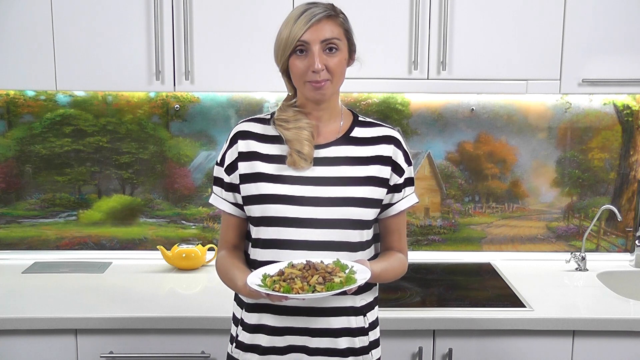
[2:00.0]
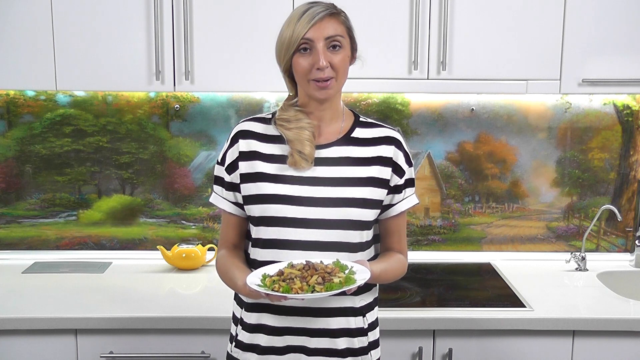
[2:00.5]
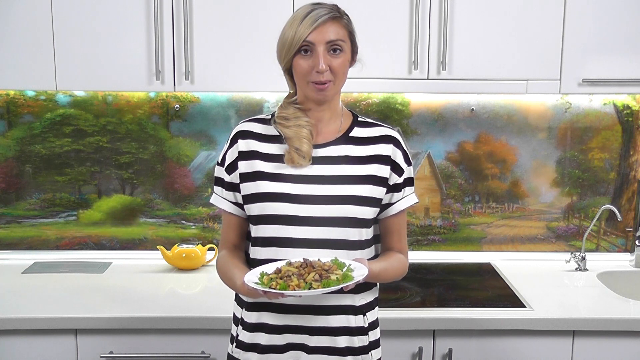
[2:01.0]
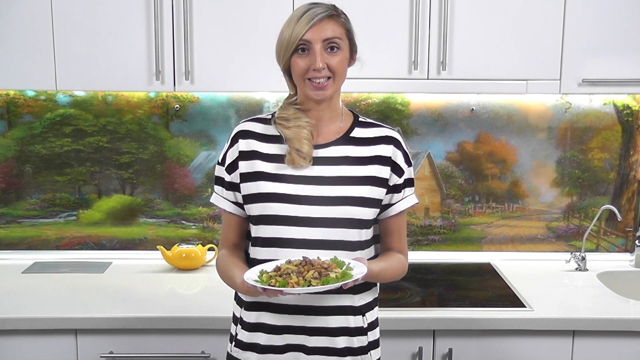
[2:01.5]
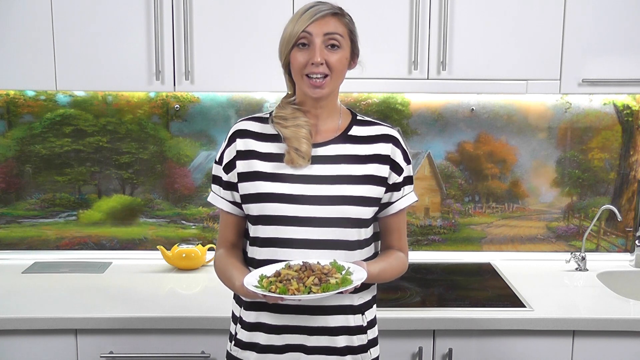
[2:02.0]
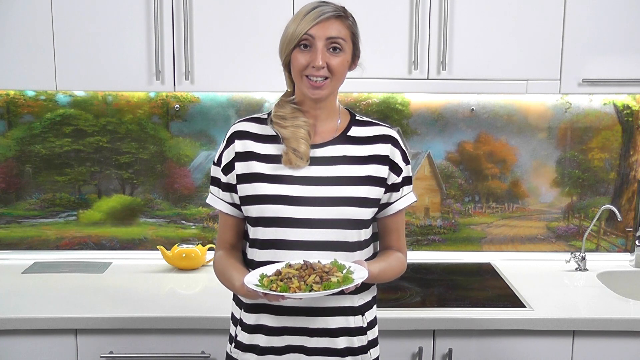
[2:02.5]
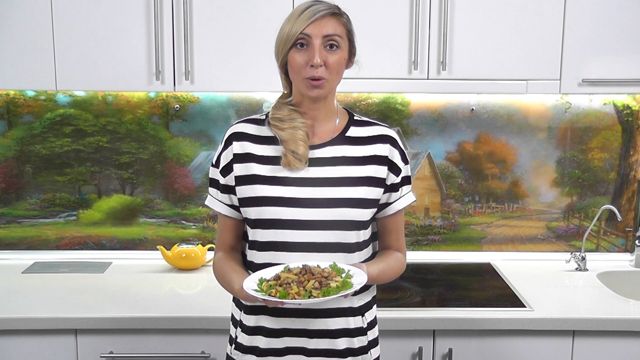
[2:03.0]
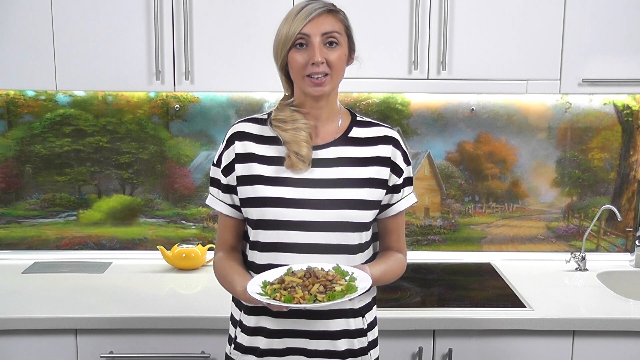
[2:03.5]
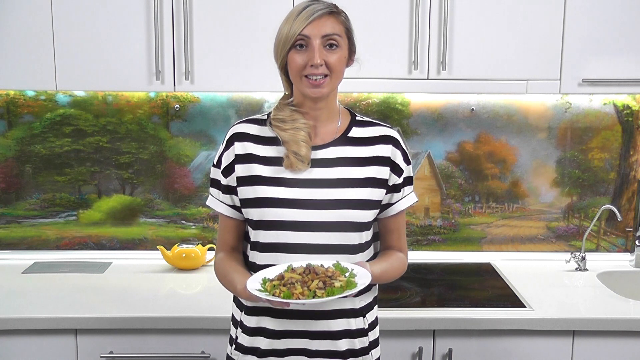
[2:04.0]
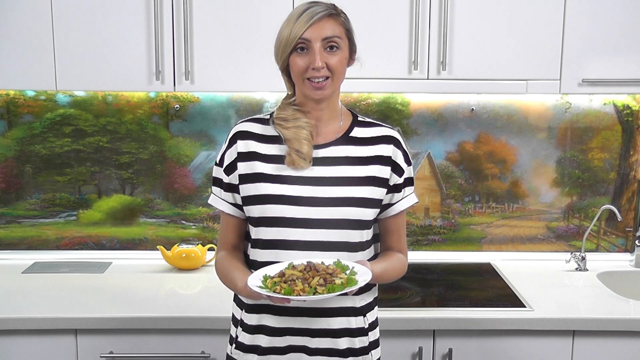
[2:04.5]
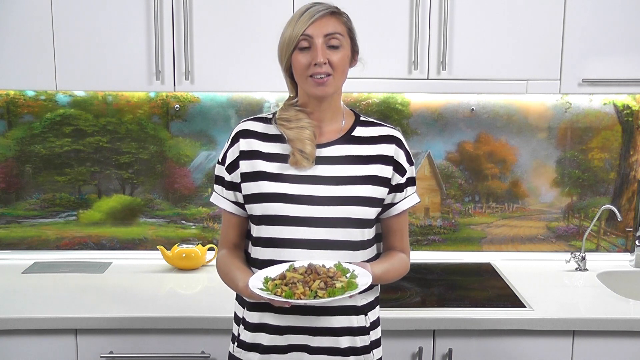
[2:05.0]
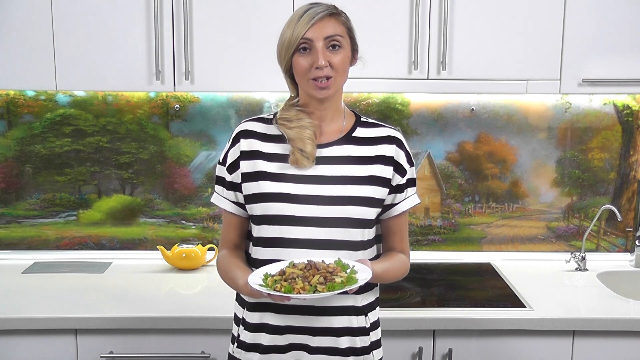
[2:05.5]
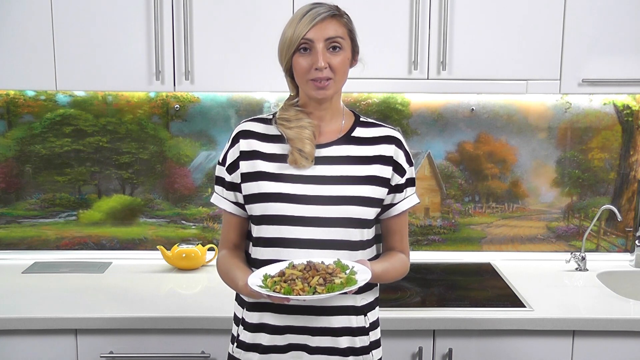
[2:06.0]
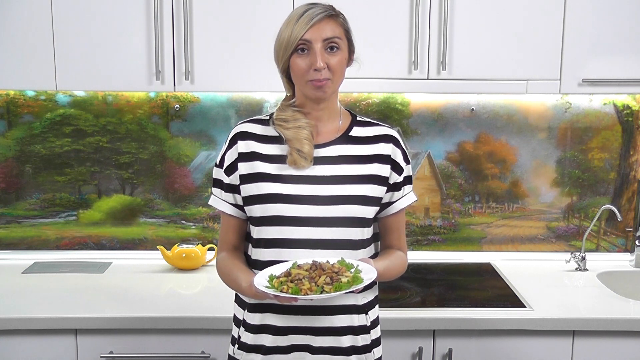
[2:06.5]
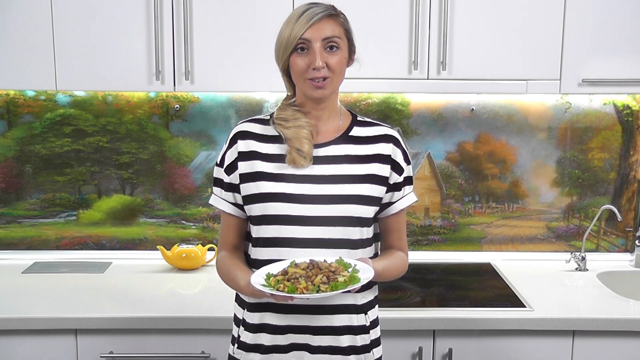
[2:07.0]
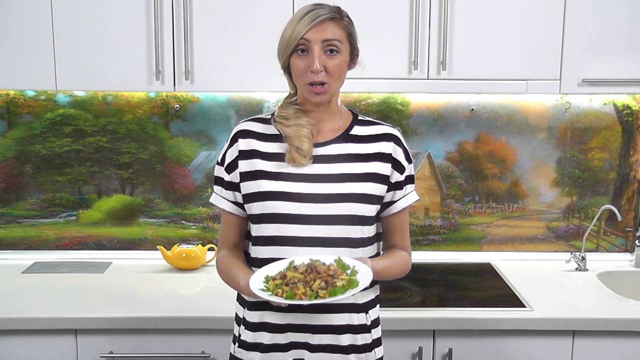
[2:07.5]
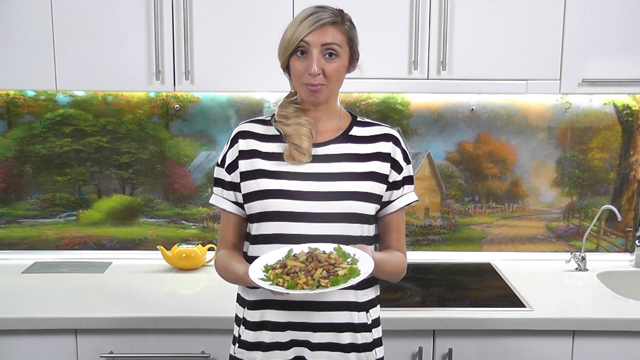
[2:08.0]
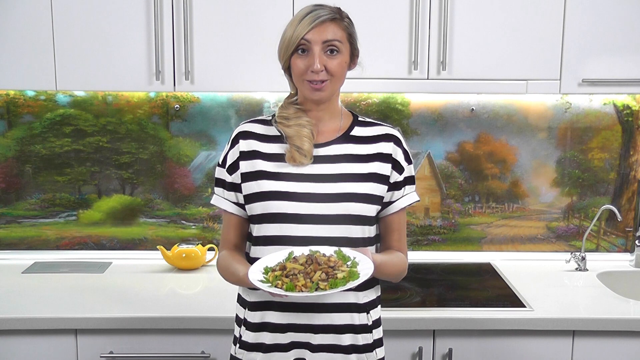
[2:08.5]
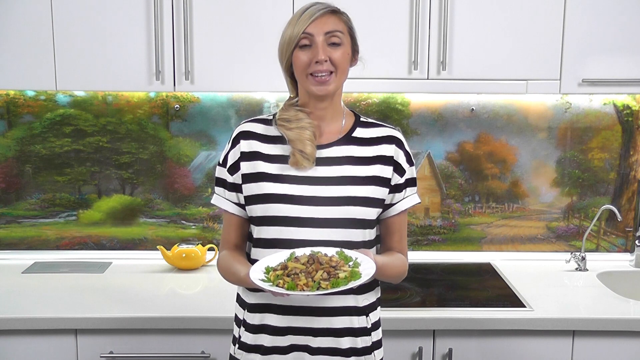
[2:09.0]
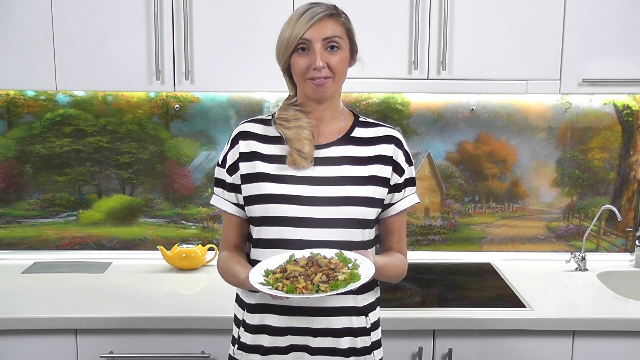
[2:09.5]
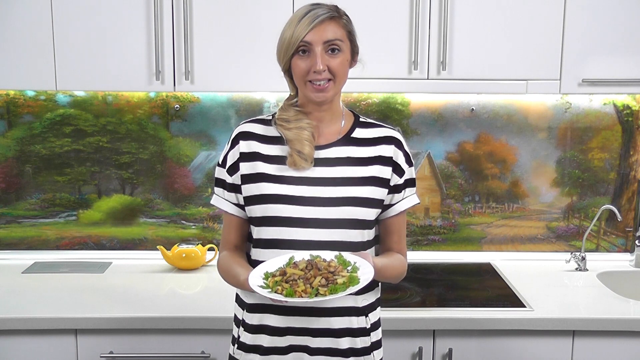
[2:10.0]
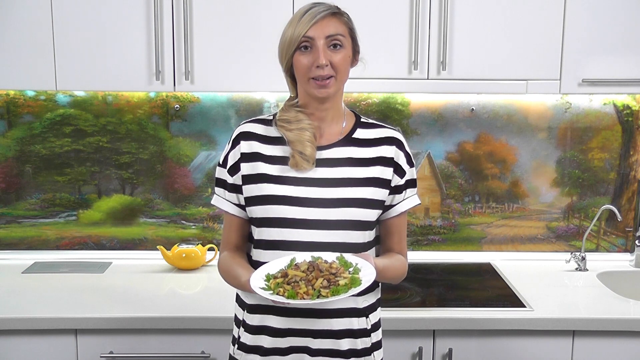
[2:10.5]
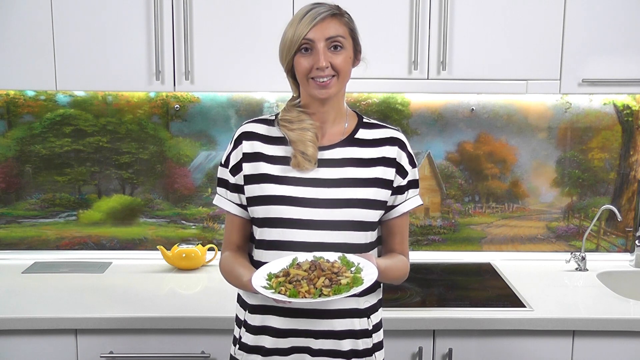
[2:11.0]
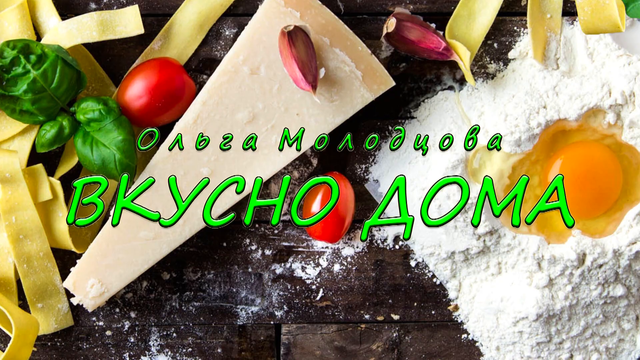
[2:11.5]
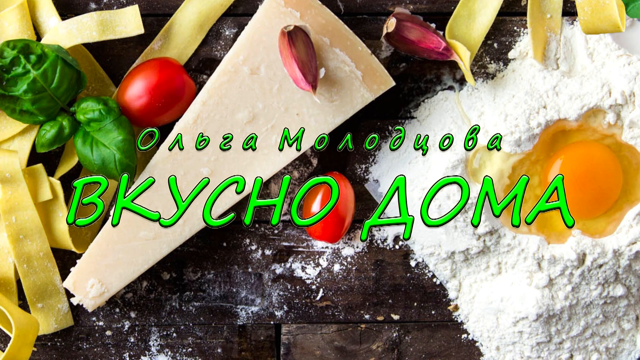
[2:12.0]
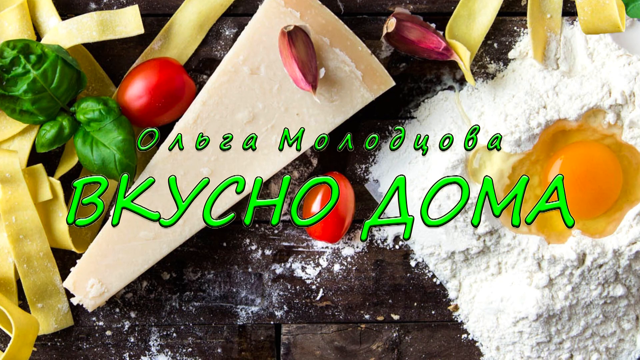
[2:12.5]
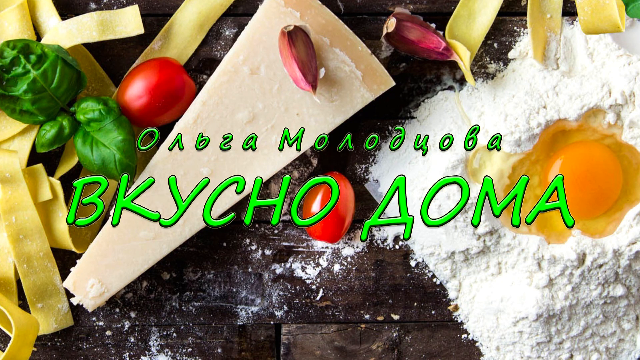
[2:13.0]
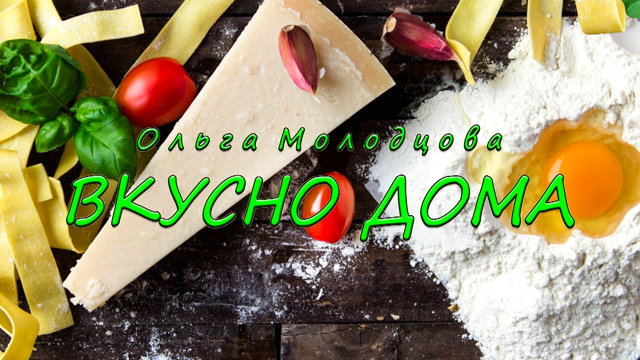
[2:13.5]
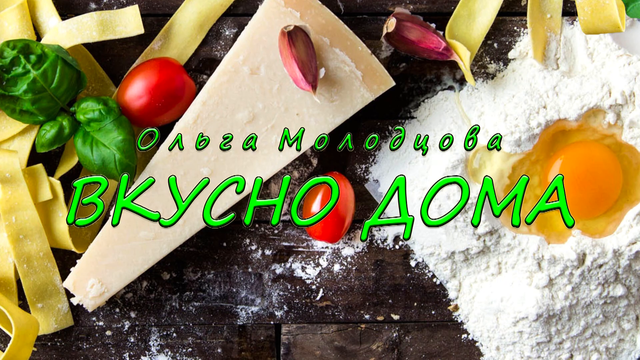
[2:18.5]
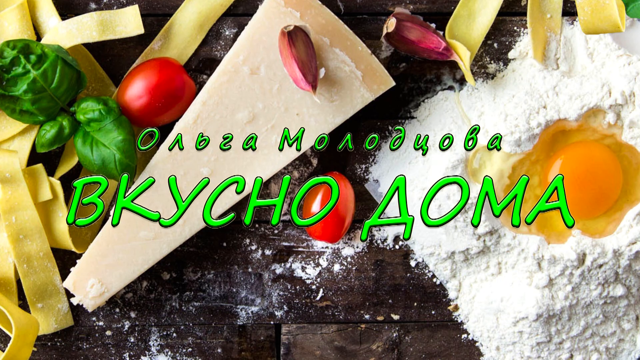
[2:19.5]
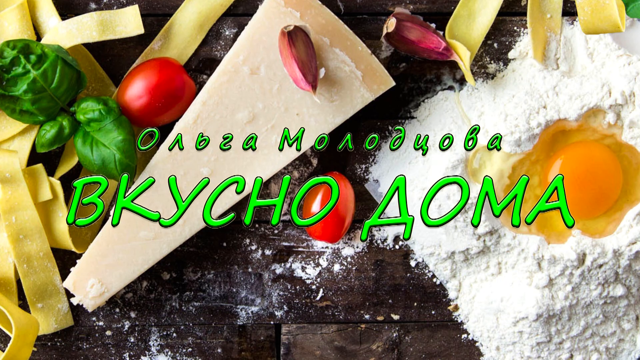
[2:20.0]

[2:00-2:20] She holds the dish in one or two hands. The backsplash behind her shows trees with visible bark, a grassy field, a river, a house, what may be a barn with a fence, a road, and the sky. A black cooktop is behind her with a yellow teapot or something similar on it, and the counter is white. A bit of the sink is visible, along with the faucet and the pump. She wears a black and white shirt and a silver necklace, and her hair is pulled to one side. She talks, her white teeth visible. Green parsley or herbs are on the plate along with the fries. Some cheese, some pasta, possibly some basil, about two tomatoes, scattered flour and a raw egg are also visible.